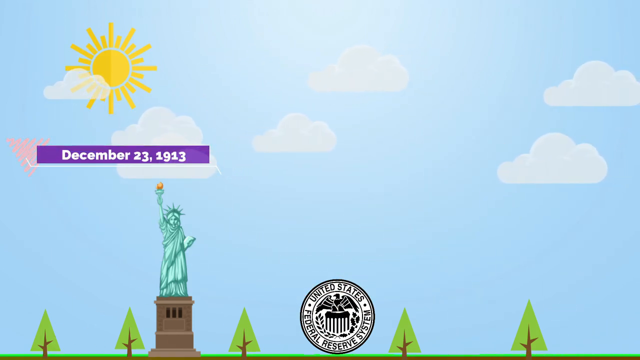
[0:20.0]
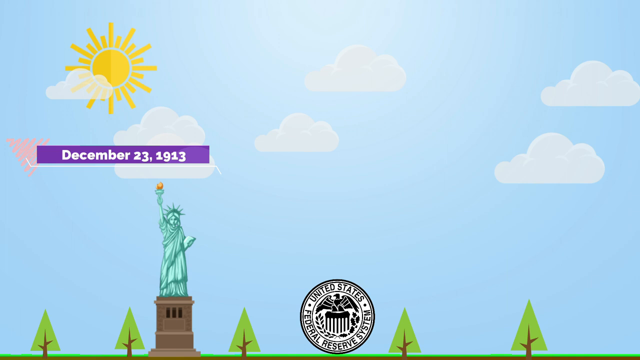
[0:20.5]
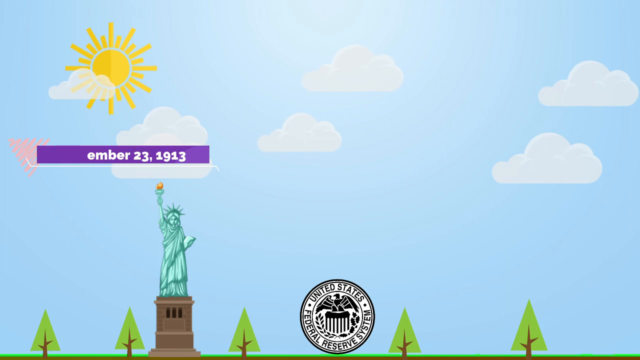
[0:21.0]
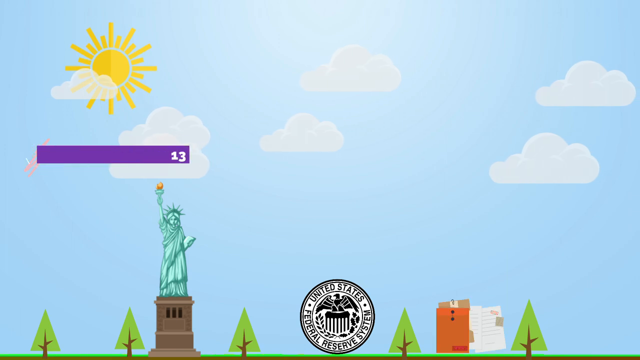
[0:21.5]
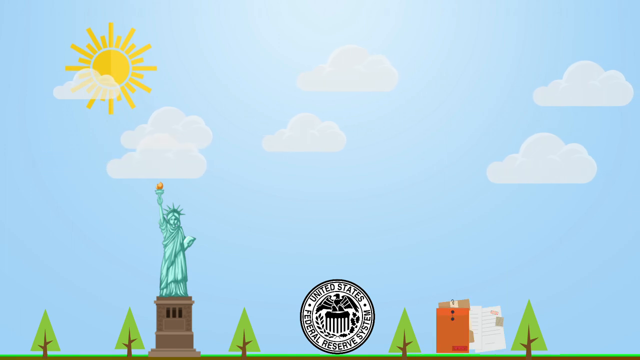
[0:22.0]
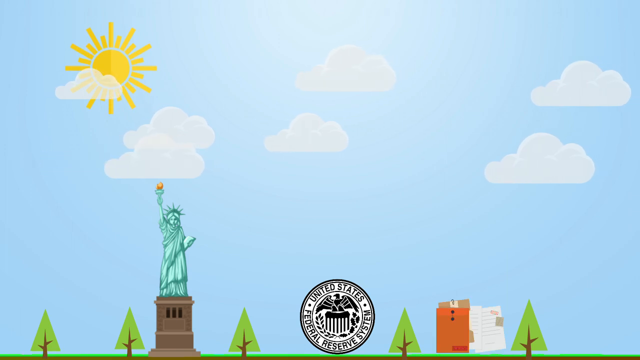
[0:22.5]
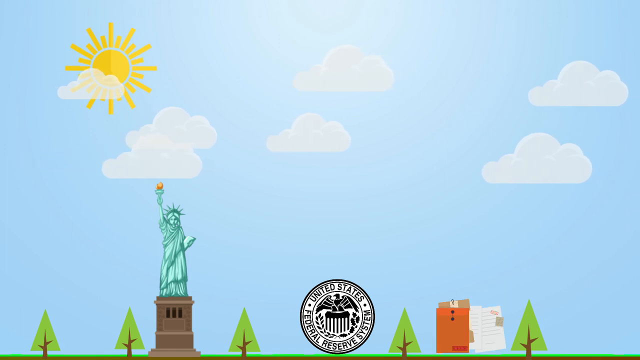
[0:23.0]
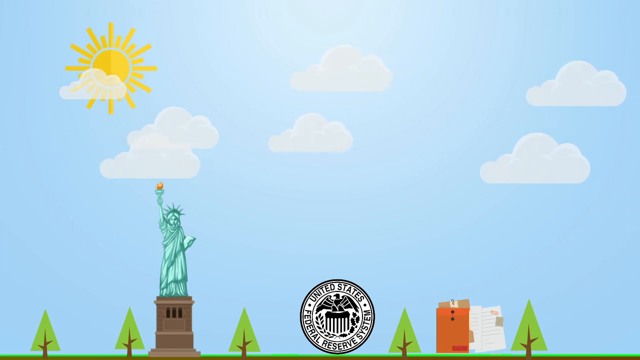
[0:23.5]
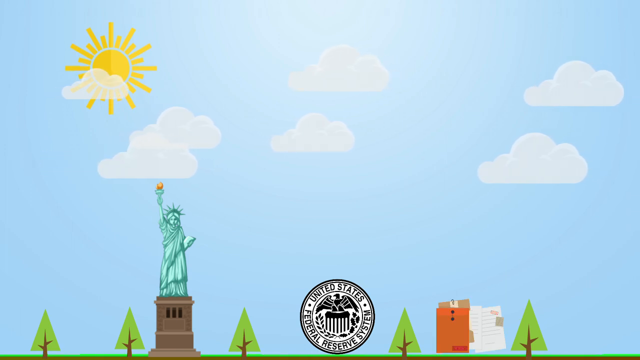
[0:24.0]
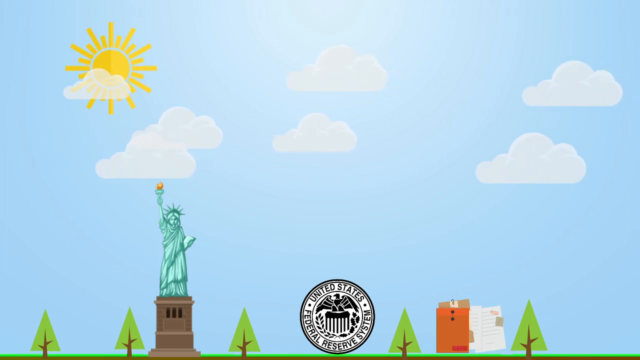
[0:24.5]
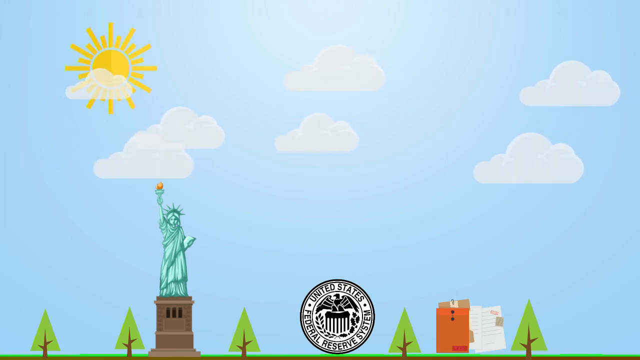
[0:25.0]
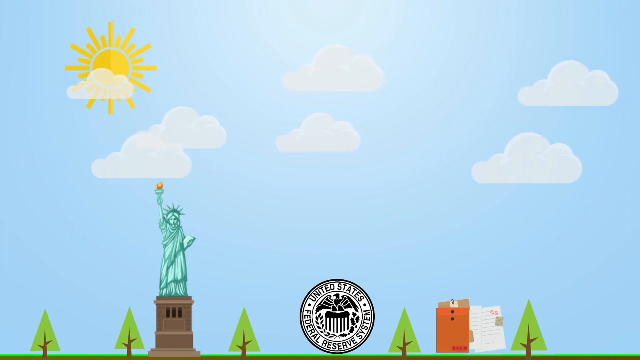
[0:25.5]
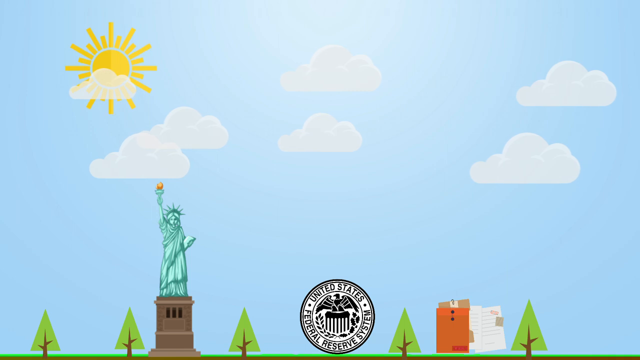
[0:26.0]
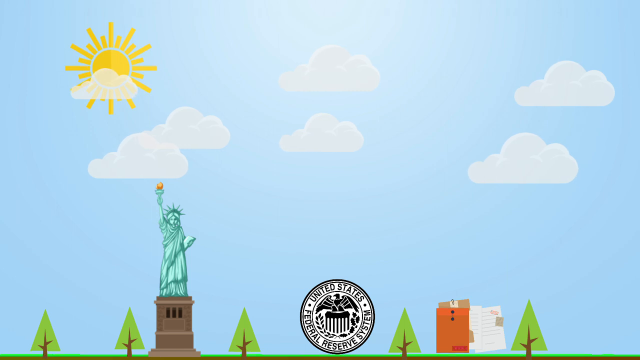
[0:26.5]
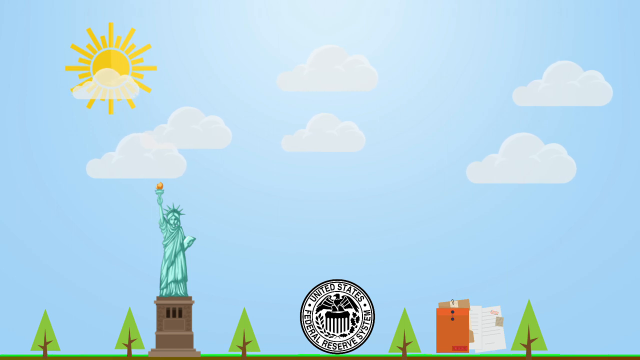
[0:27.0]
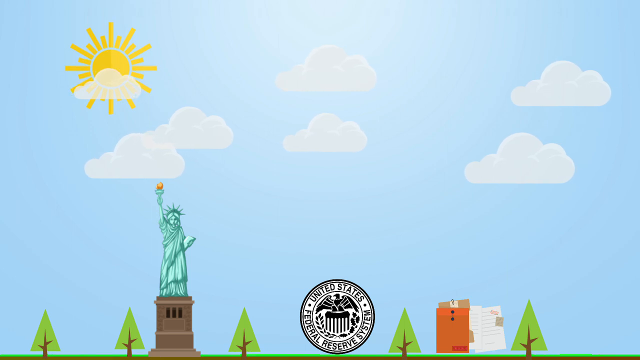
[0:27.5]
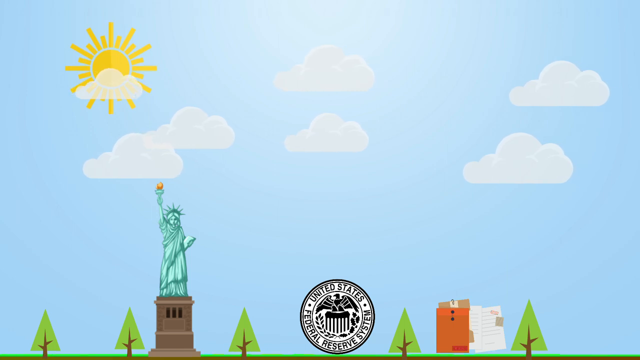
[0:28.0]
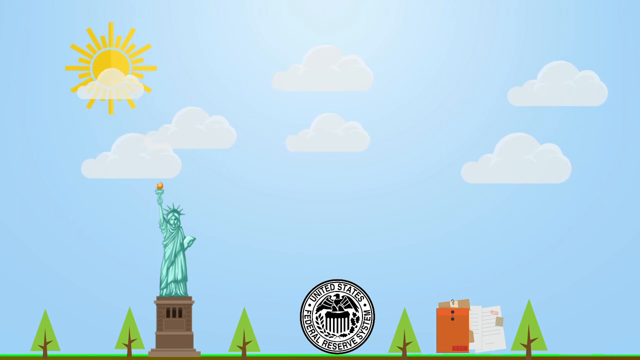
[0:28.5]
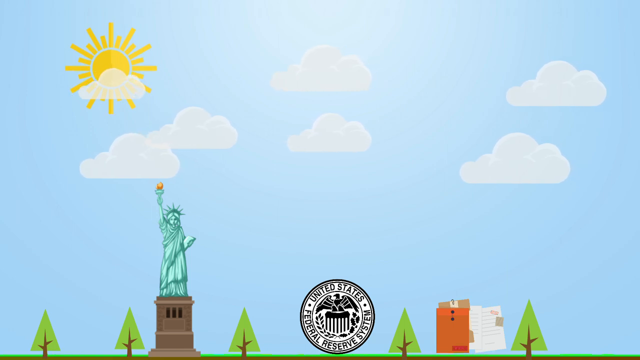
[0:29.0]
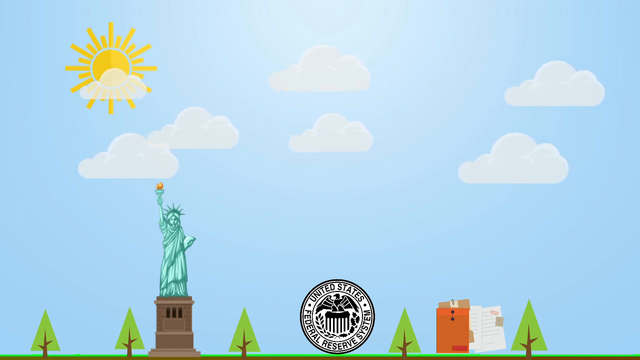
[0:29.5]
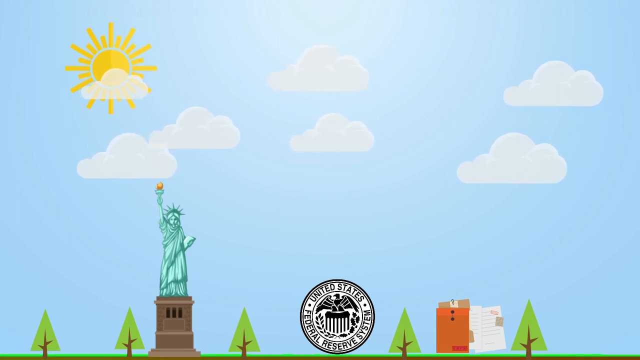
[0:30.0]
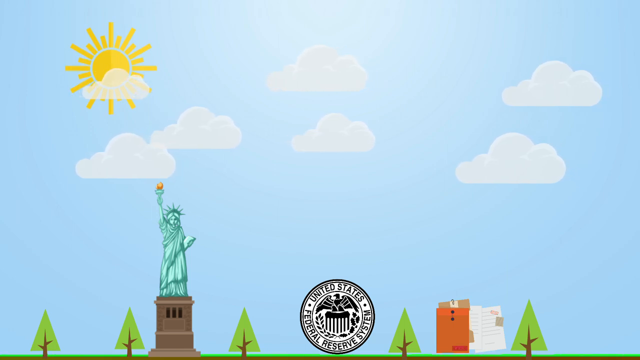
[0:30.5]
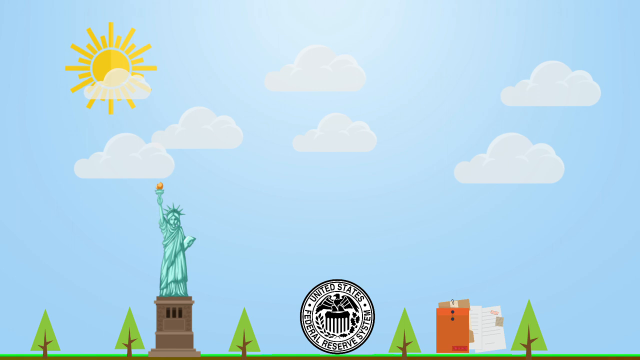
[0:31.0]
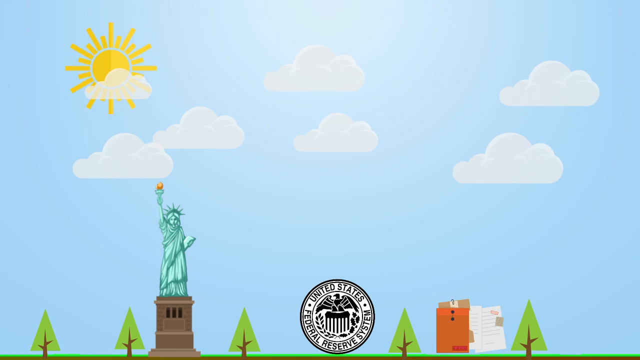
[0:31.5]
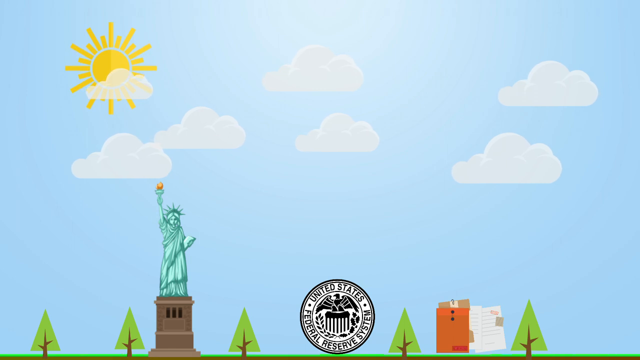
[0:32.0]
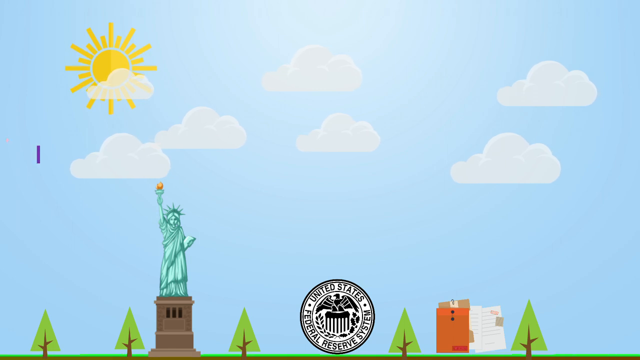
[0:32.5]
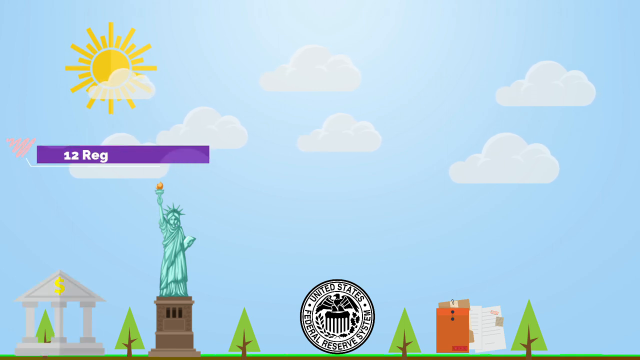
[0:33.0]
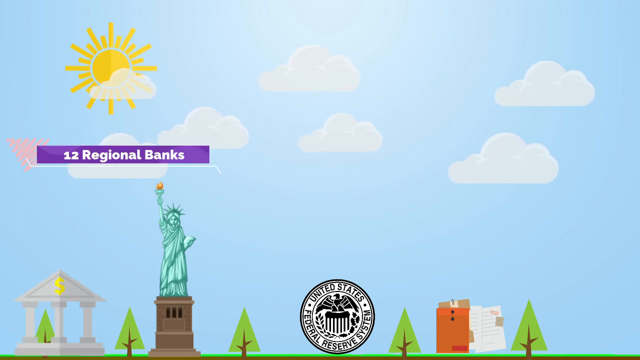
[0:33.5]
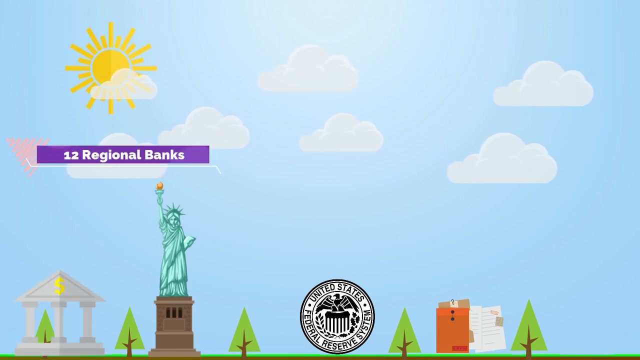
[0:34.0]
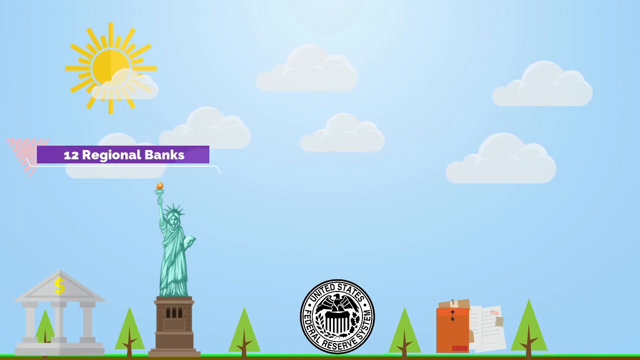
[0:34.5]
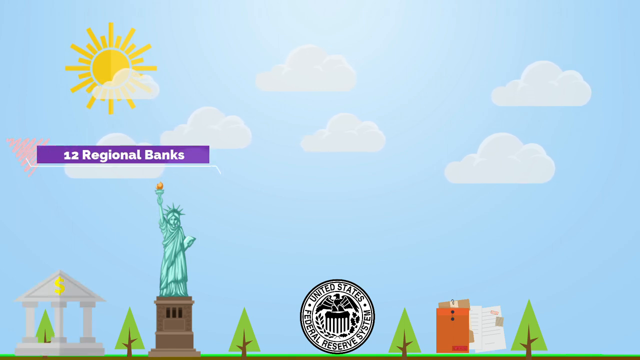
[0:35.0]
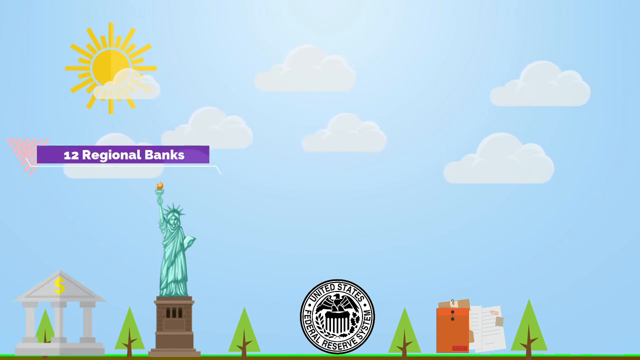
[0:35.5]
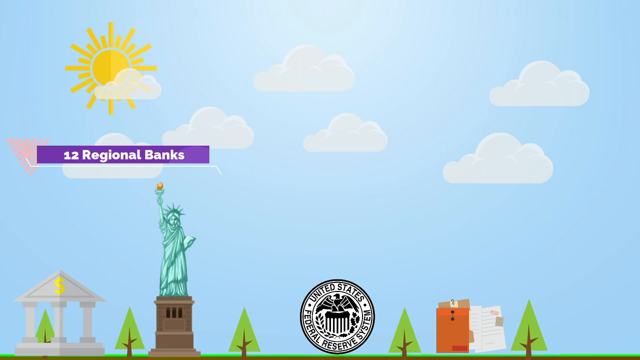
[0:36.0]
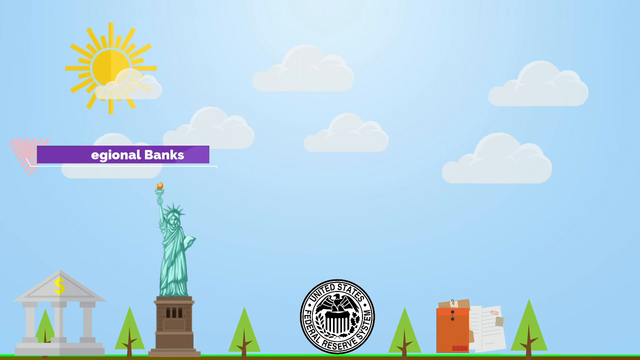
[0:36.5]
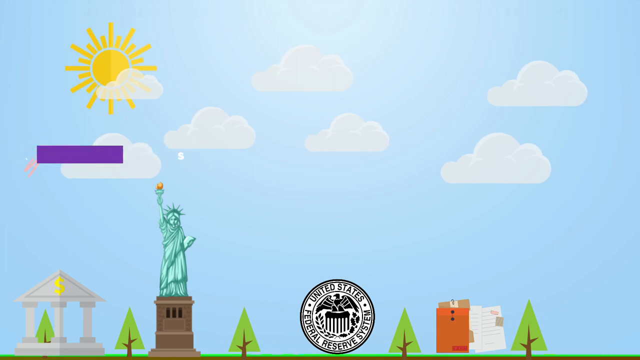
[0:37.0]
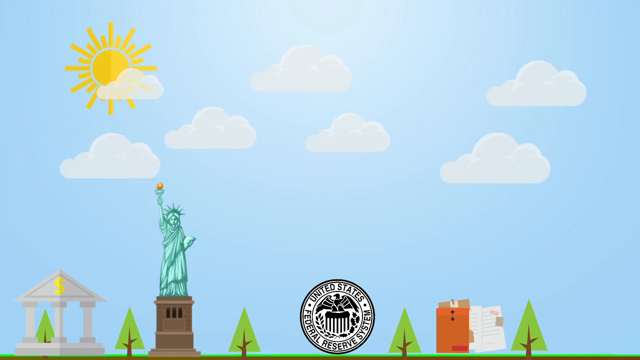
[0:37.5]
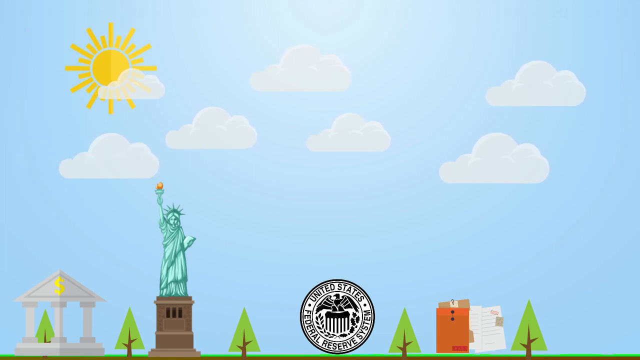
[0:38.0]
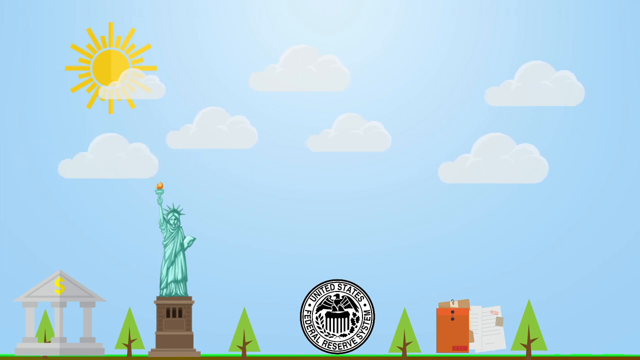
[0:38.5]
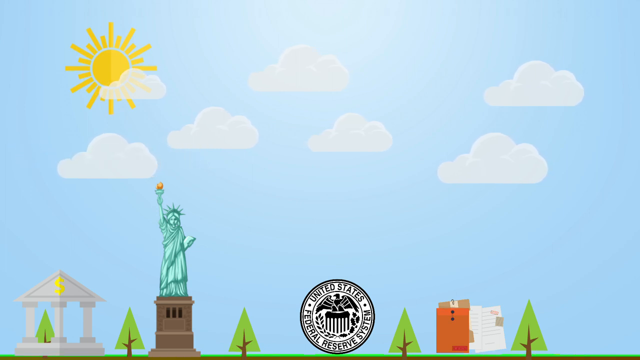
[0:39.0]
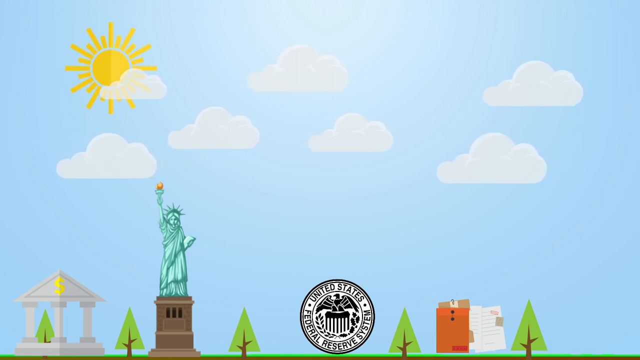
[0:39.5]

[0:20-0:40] The light blue sky now has seven fairly white clouds, and a sun is in the top left corner. The sun has a yellow gradient, with yellow on its right side, while the left half of the sun is a dark golden color. The green Statue of Liberty holds a torch with one hand straight up; the torch handle is green and the flames are red and yellow. The statue has a crown, holds a book in the other hand, and stands on a brown mount. An emblem says "United States Federal Reserve System" and has an eagle in it, in blue and white. At the bottom of the screen are five trees painted green and a dossier colored orange with a touch of brown. The clouds are moving. A banner is introduced that says "Trove Regional Banks" in white on a purple background. At the bottom of the video there is also a building with a yellow dollar sign.